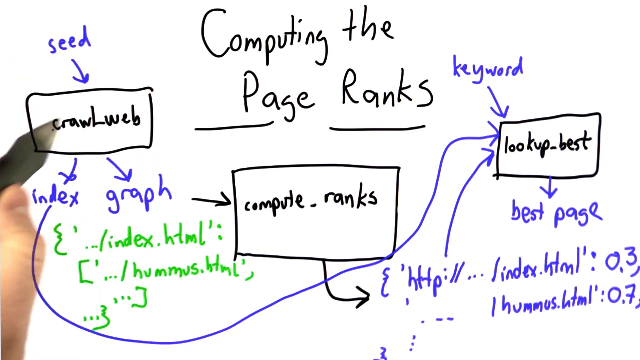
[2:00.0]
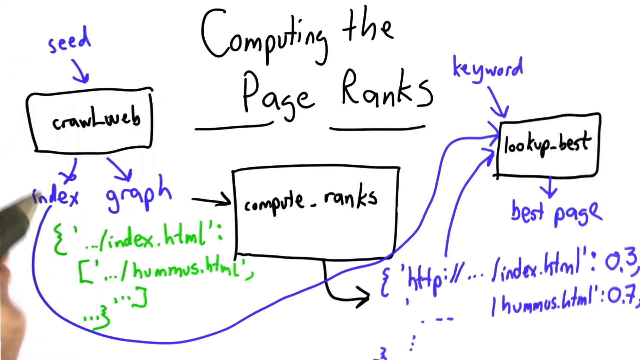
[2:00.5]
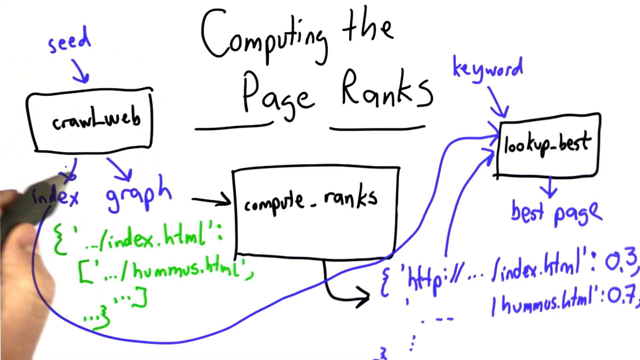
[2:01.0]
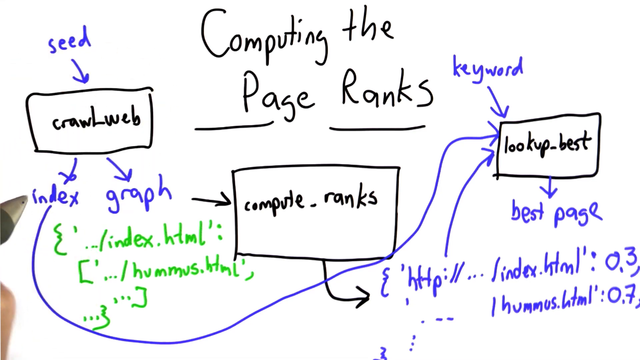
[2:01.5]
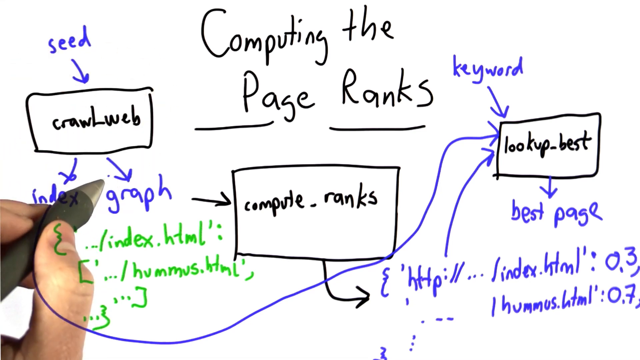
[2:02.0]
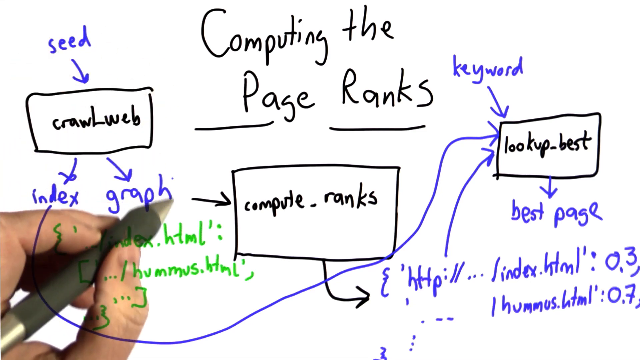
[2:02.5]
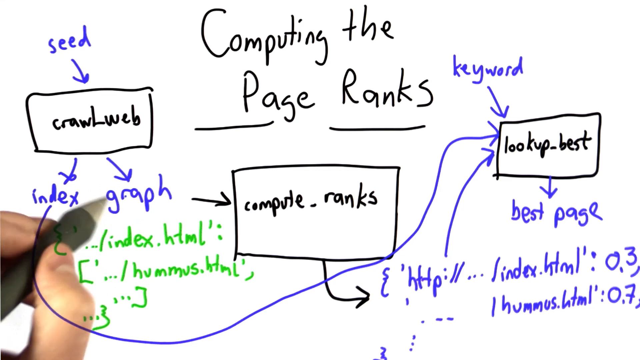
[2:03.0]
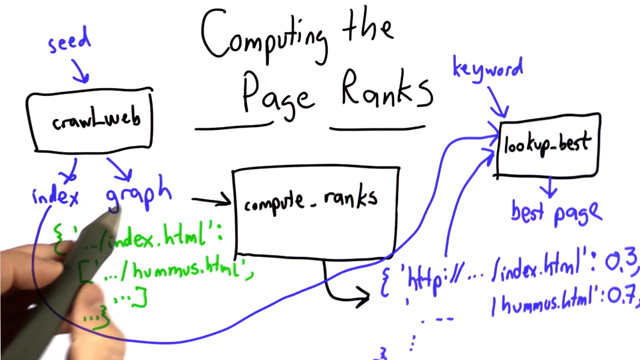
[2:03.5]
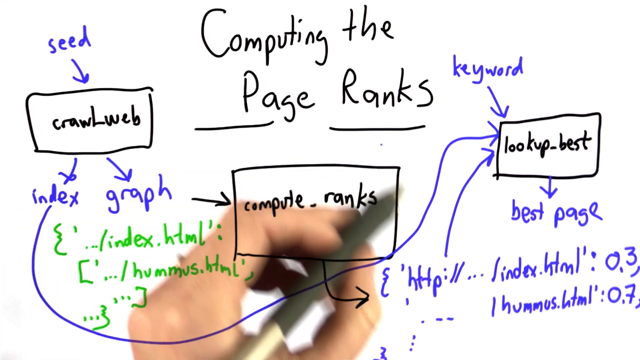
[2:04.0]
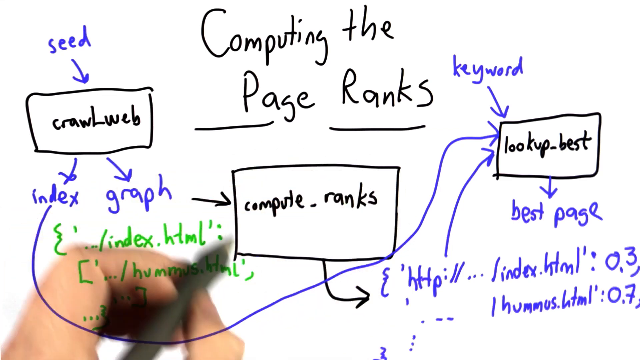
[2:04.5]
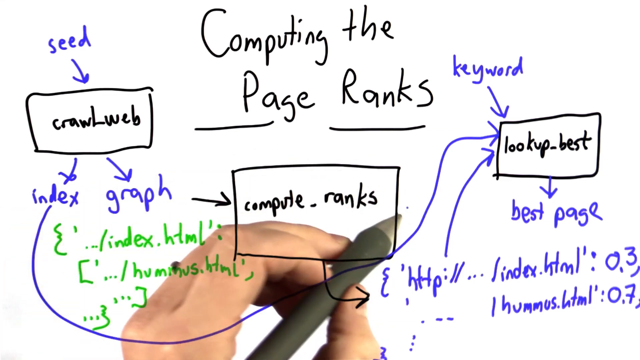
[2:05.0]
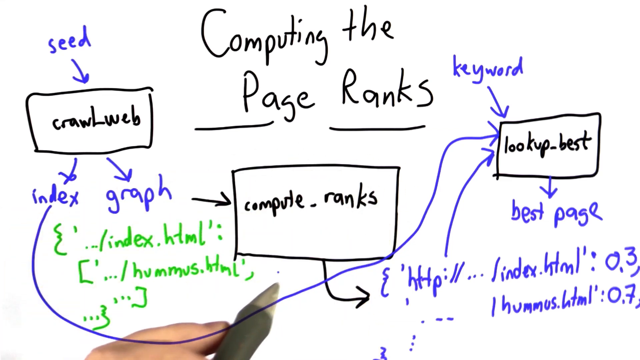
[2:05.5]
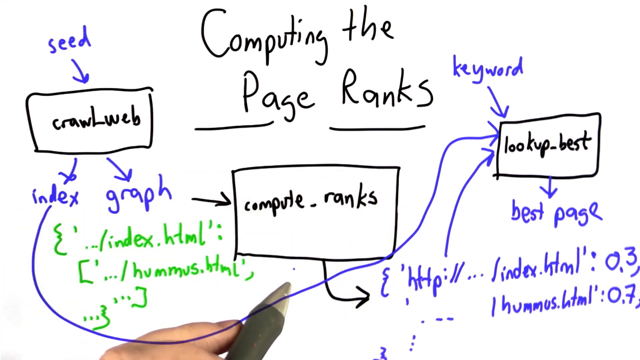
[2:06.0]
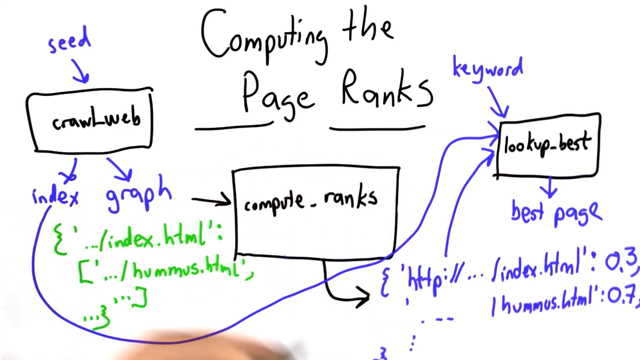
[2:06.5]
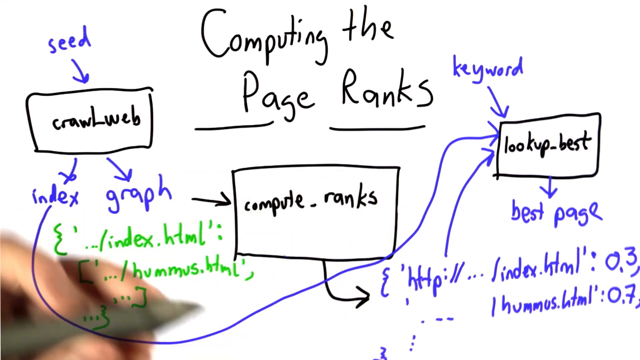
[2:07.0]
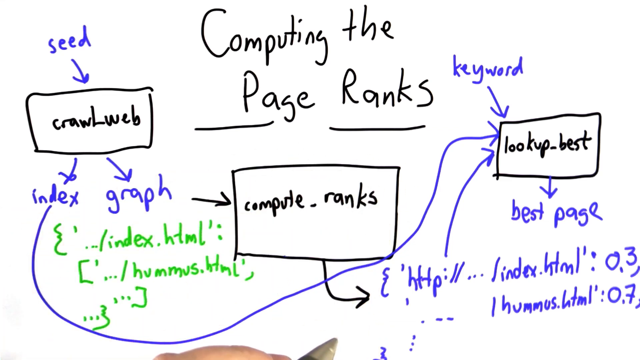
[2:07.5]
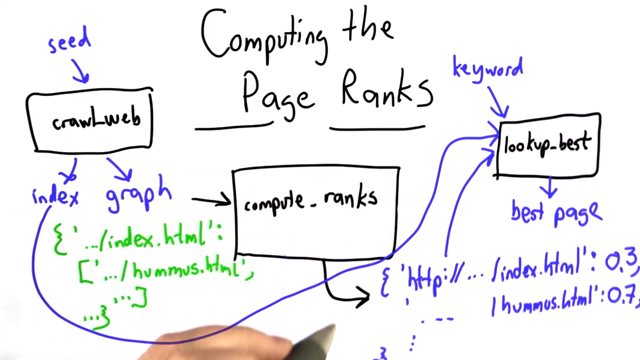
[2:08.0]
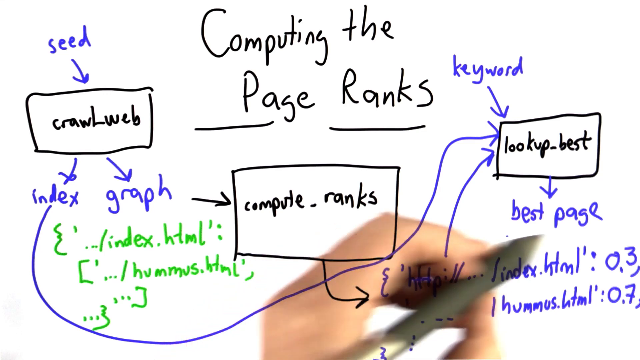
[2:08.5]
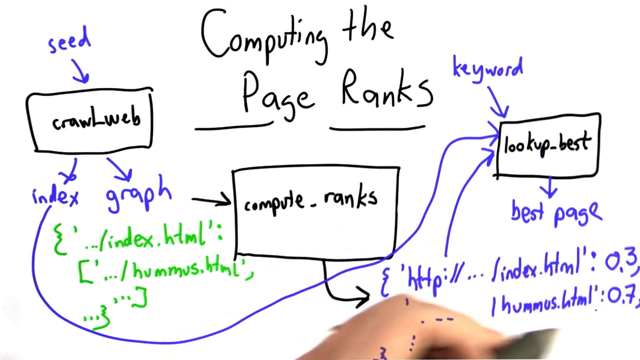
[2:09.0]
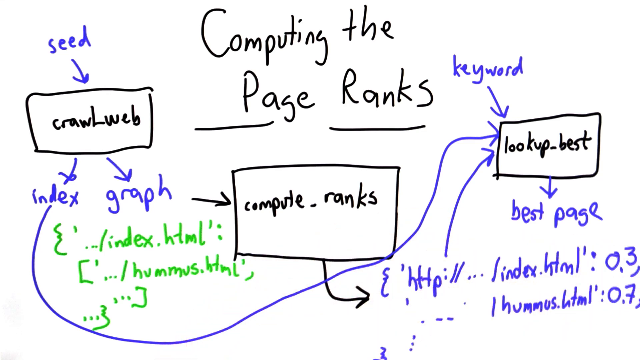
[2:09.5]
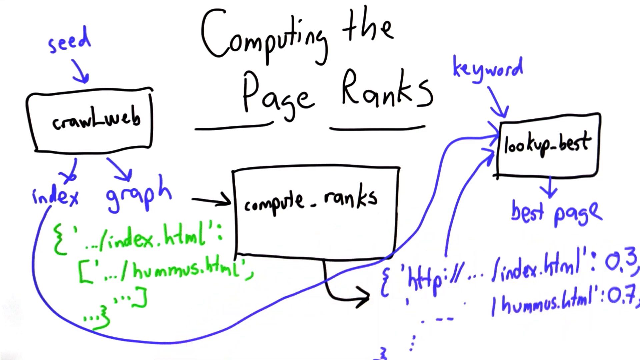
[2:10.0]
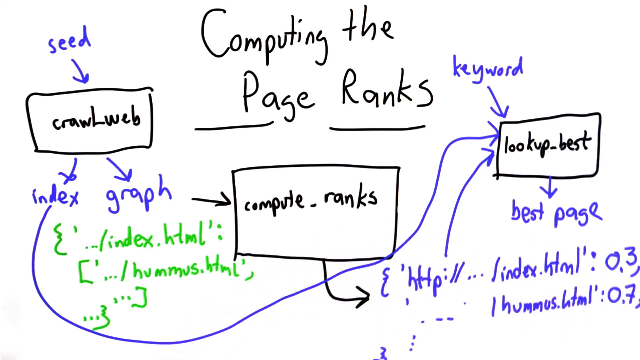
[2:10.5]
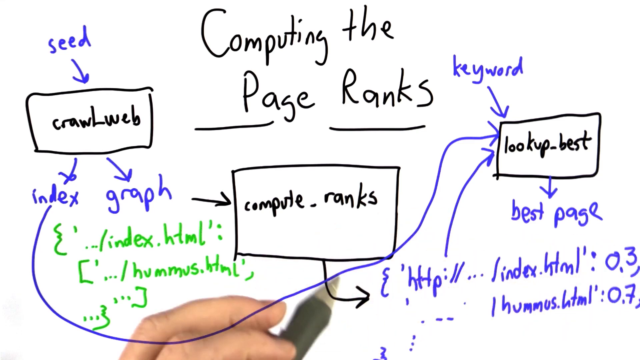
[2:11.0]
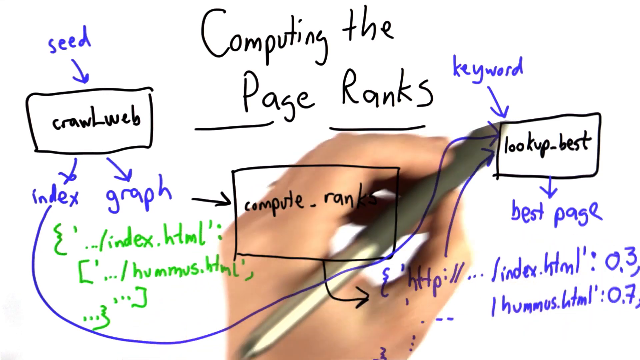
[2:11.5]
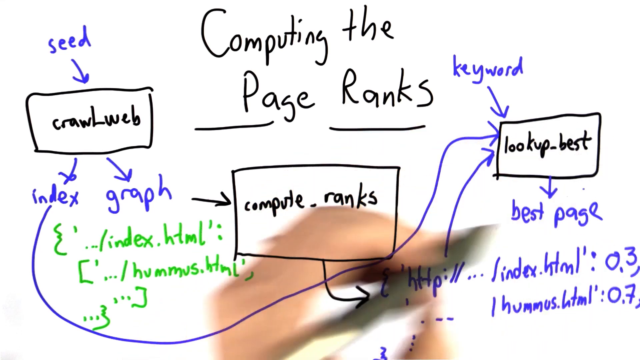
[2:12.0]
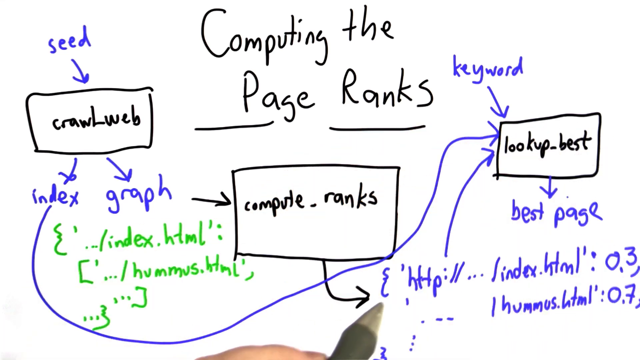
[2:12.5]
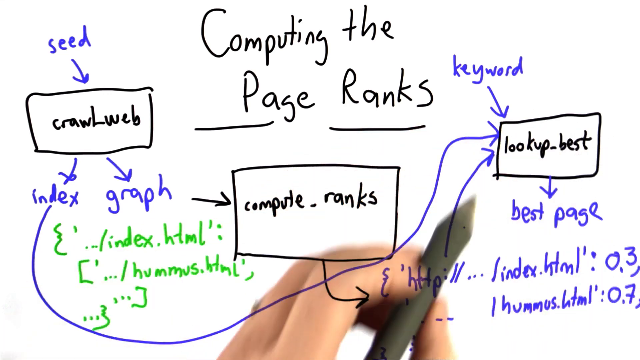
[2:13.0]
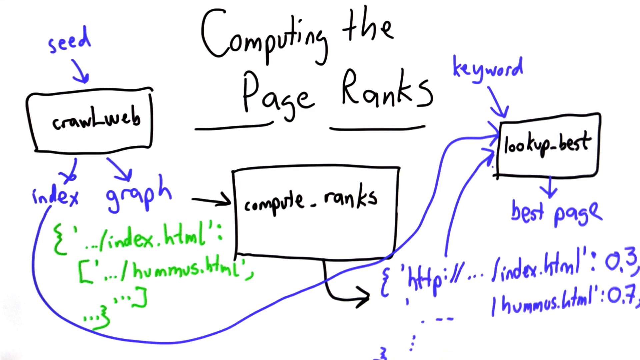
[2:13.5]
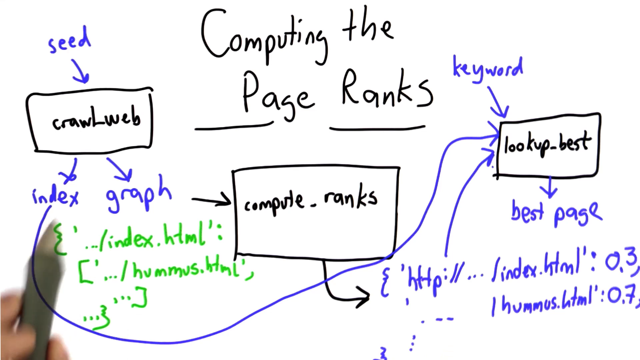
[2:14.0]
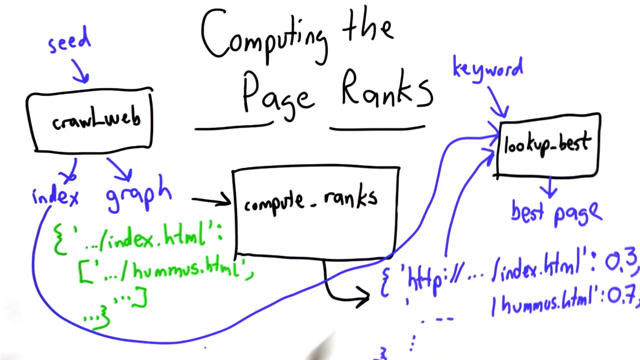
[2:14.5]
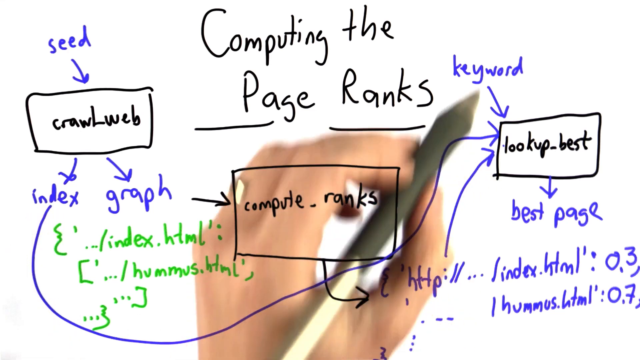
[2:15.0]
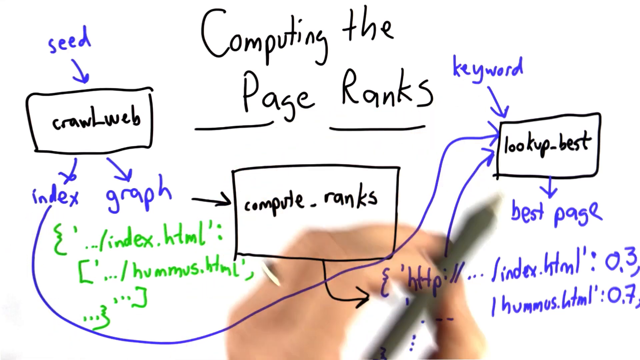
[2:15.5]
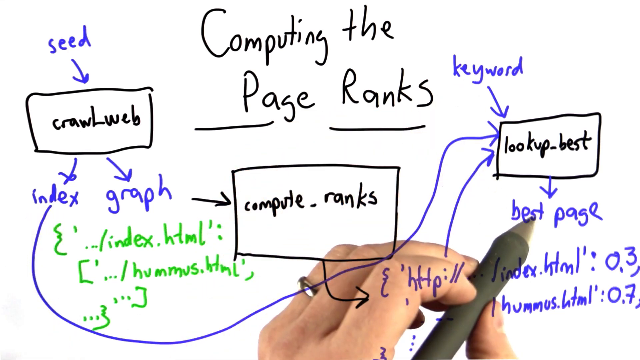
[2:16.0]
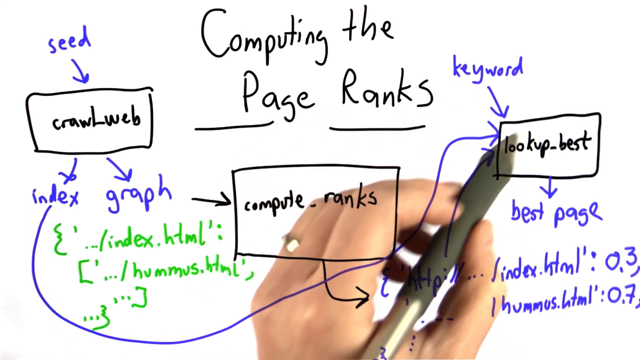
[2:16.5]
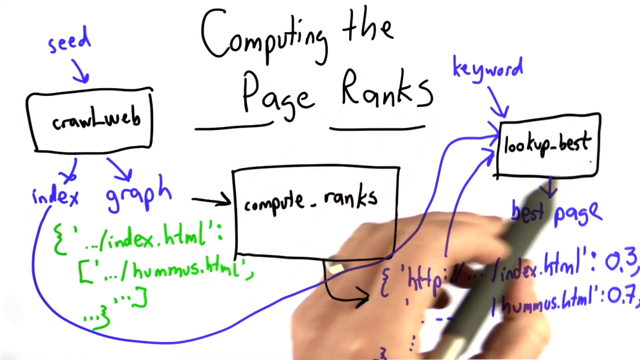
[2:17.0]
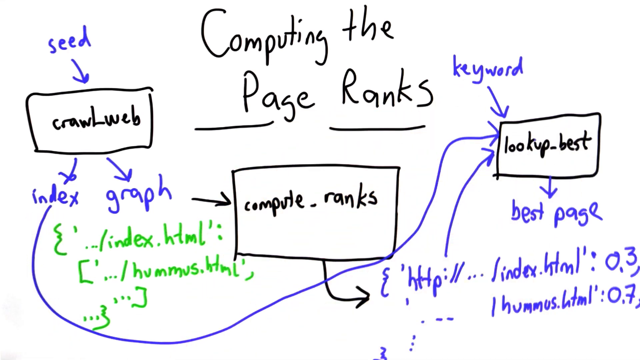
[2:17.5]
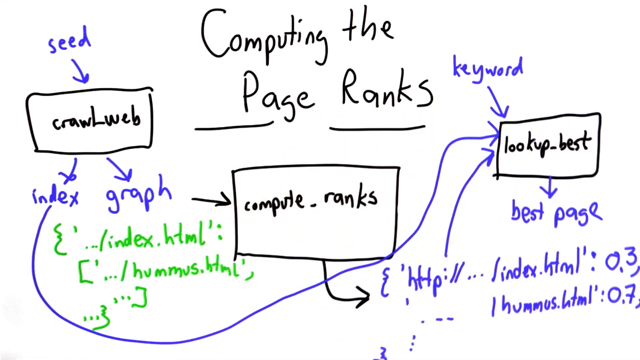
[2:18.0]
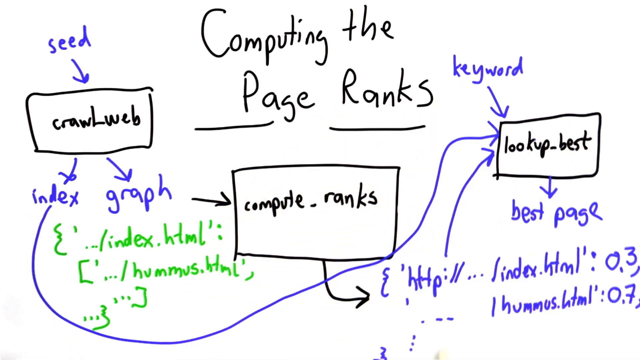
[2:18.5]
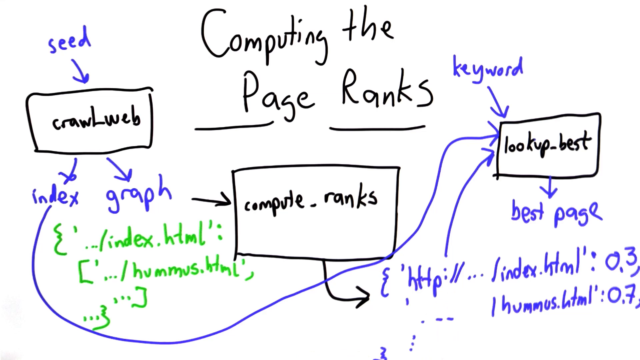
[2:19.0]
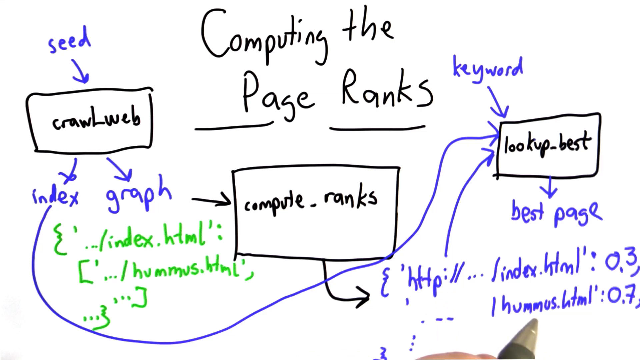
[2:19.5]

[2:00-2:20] The index and the graph are highlighted as leading to Compute Ranks. The diagram flows from crawlweb to the index and the graph, then to Compute Ranks, with its code shown below. From this code the flow goes up to lookup, which uses a keyword to find the best page on the right.